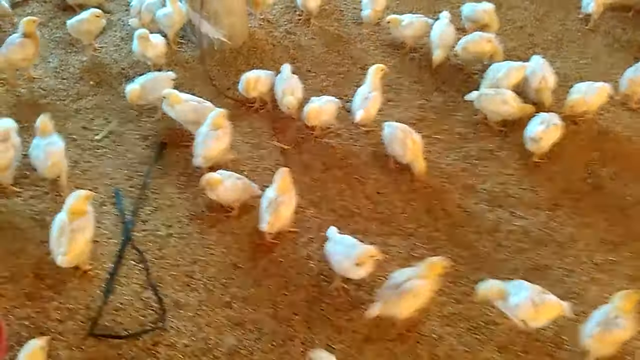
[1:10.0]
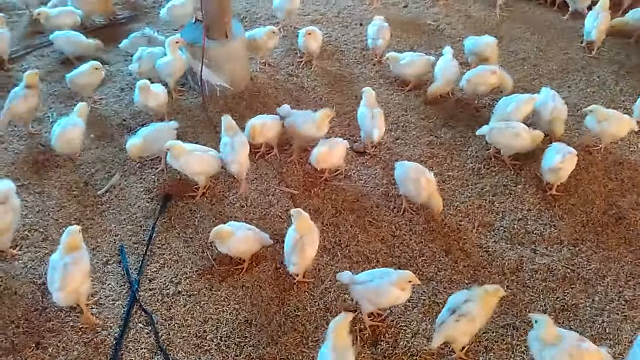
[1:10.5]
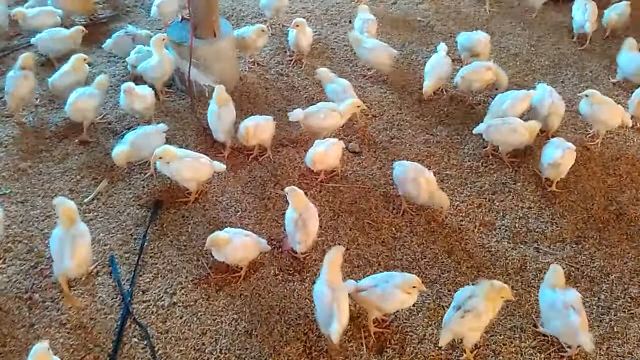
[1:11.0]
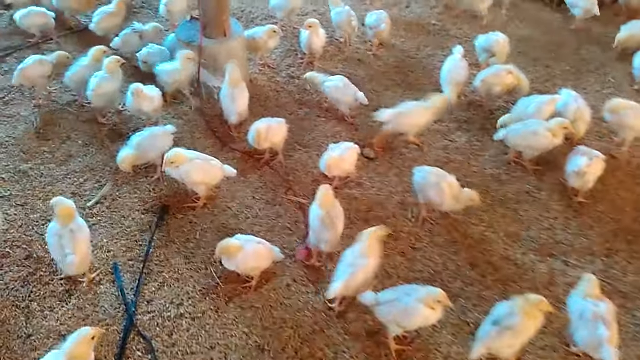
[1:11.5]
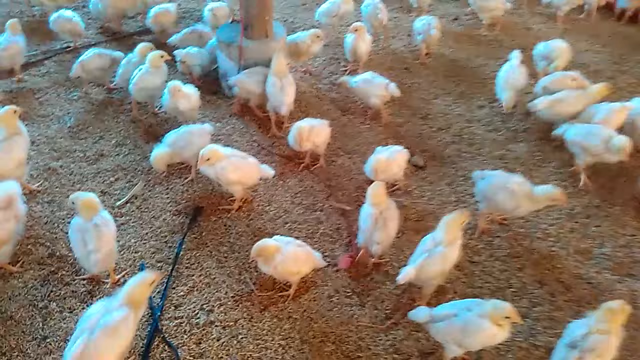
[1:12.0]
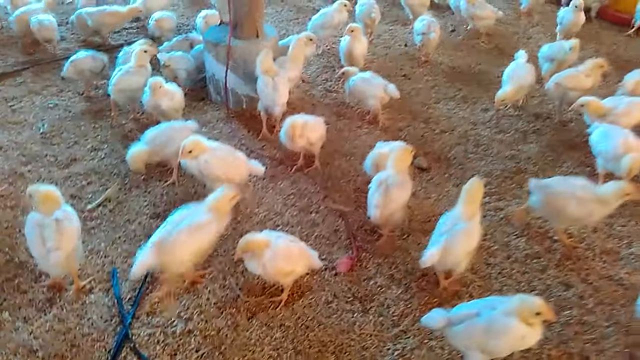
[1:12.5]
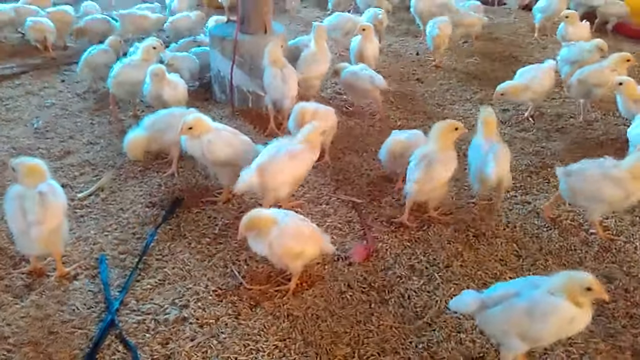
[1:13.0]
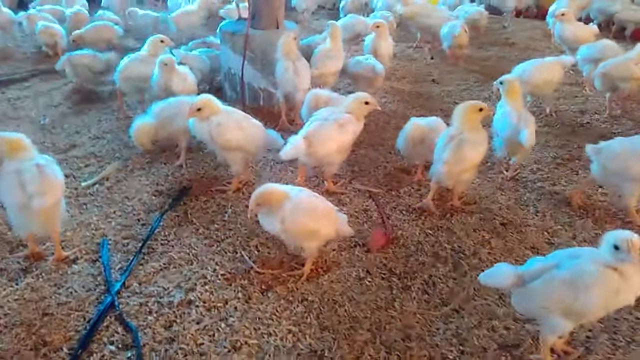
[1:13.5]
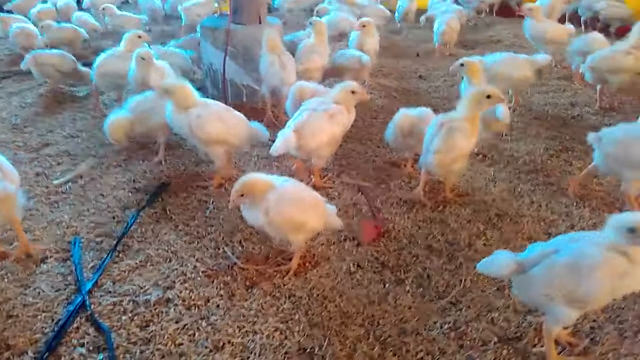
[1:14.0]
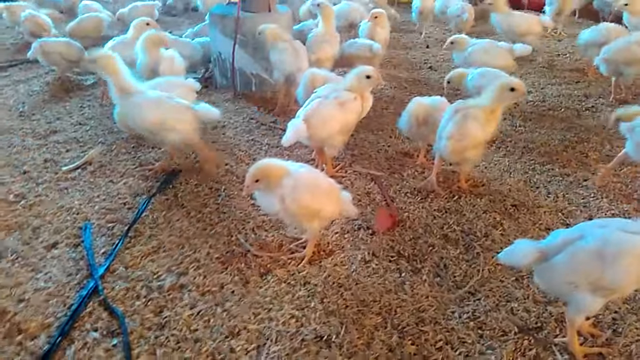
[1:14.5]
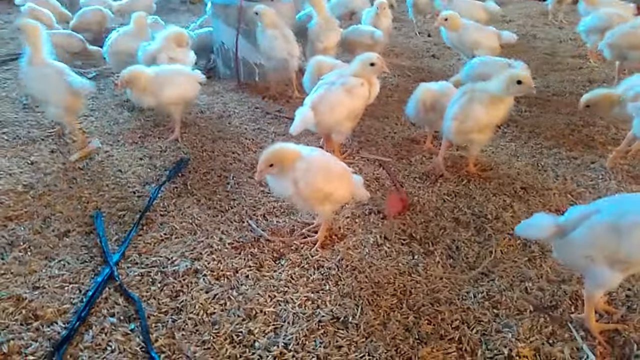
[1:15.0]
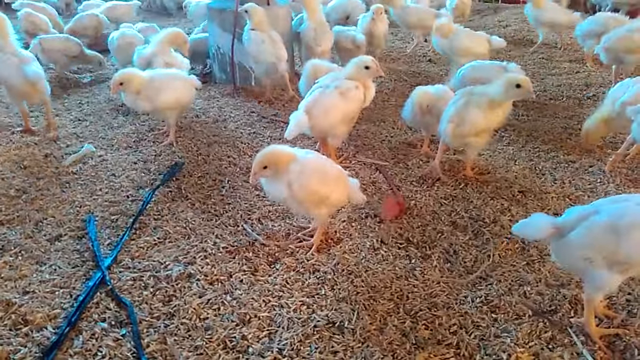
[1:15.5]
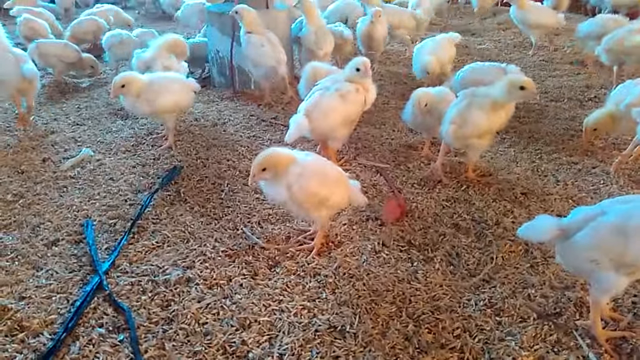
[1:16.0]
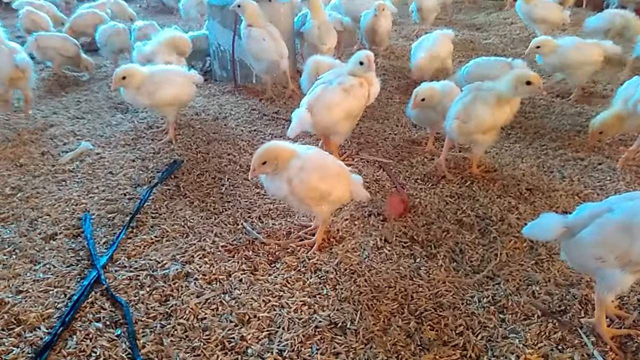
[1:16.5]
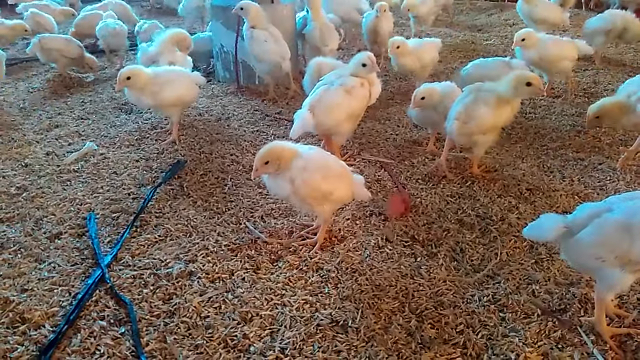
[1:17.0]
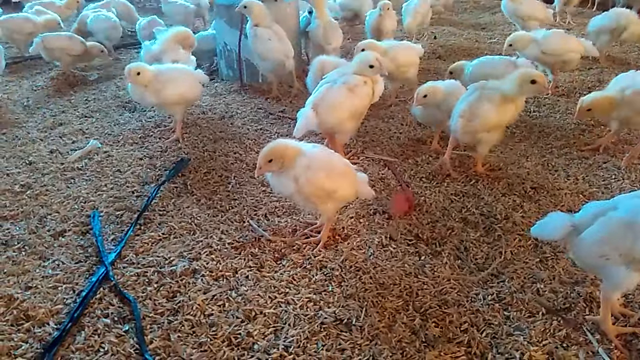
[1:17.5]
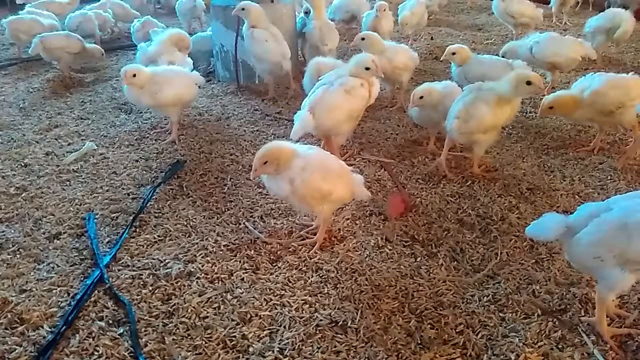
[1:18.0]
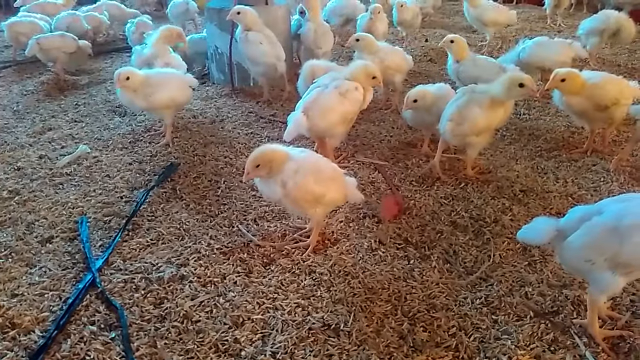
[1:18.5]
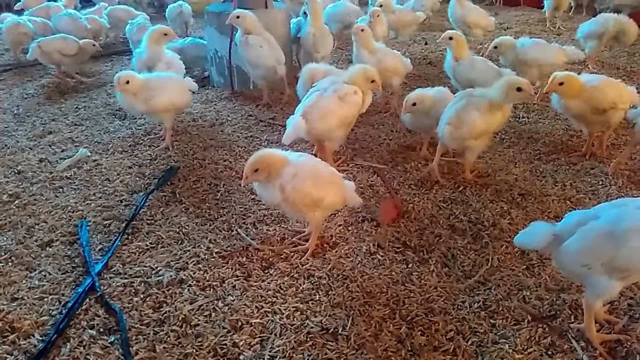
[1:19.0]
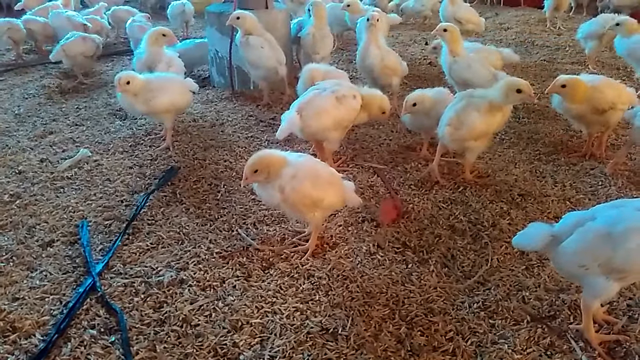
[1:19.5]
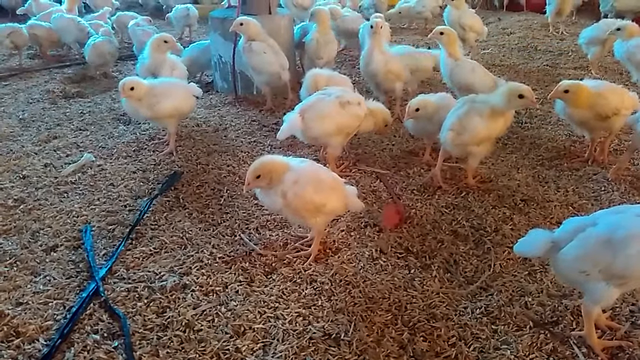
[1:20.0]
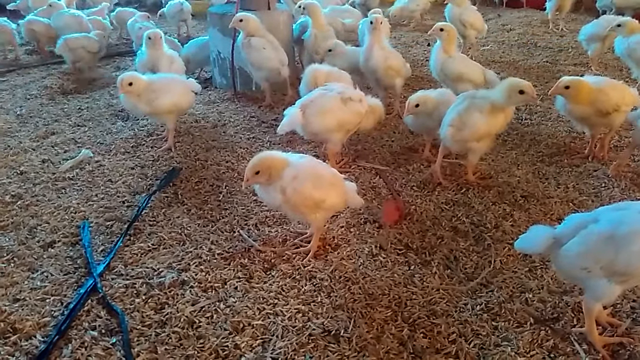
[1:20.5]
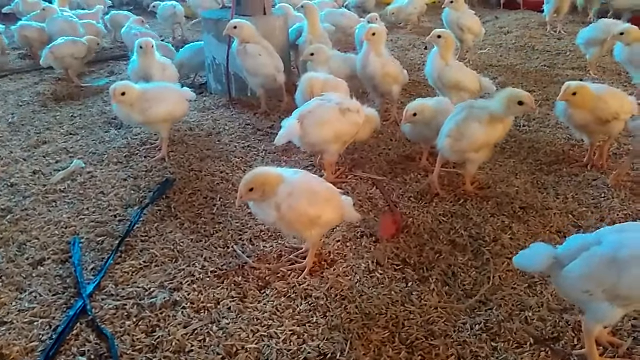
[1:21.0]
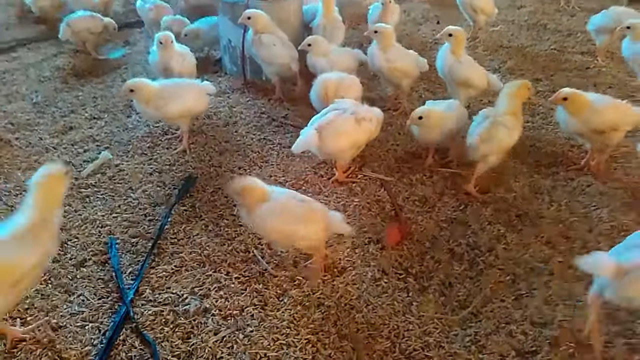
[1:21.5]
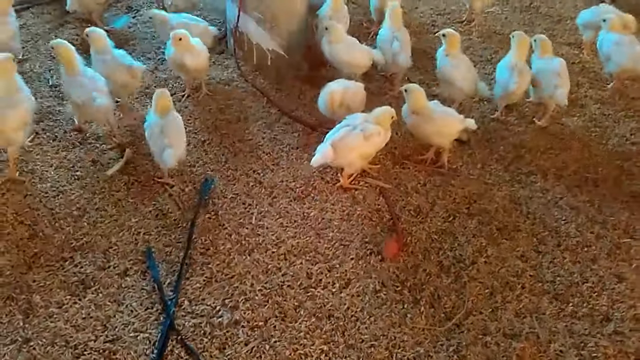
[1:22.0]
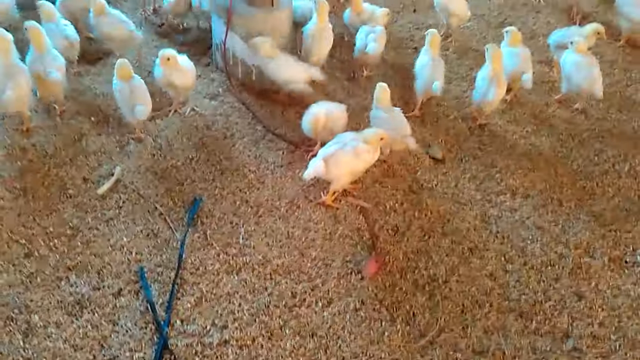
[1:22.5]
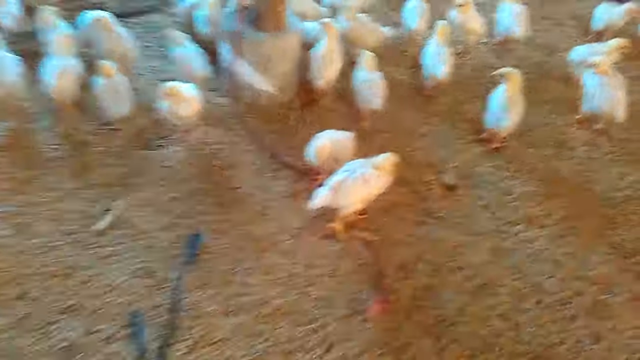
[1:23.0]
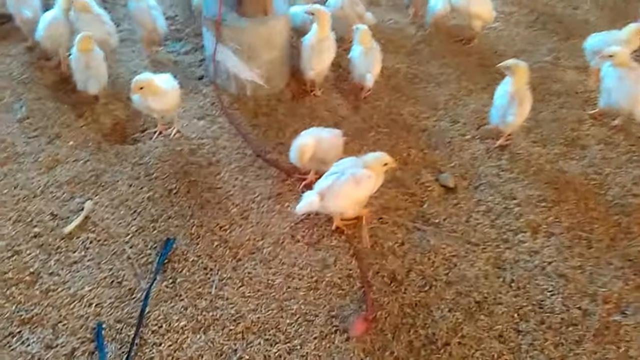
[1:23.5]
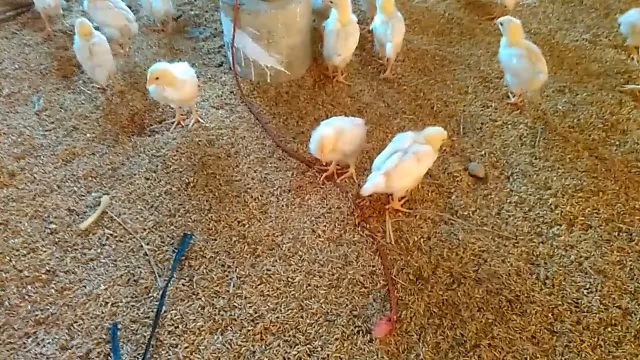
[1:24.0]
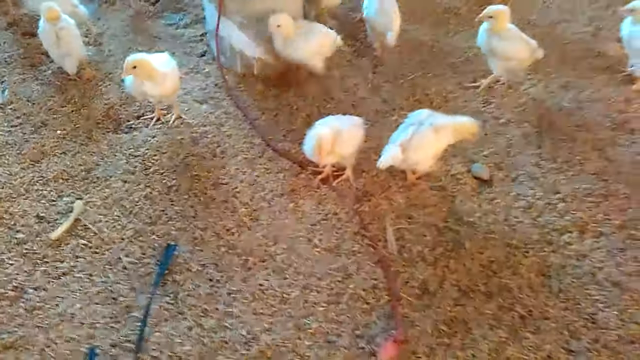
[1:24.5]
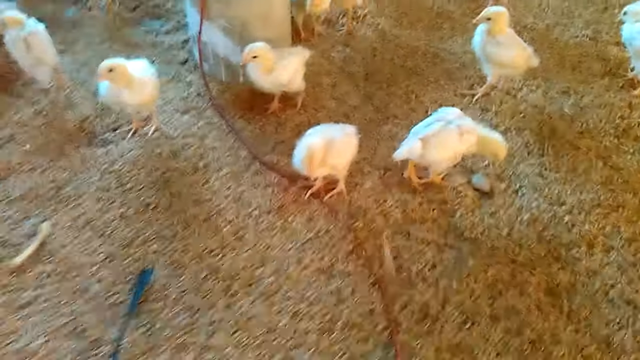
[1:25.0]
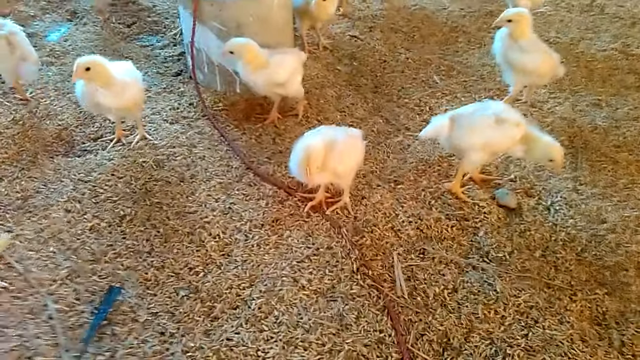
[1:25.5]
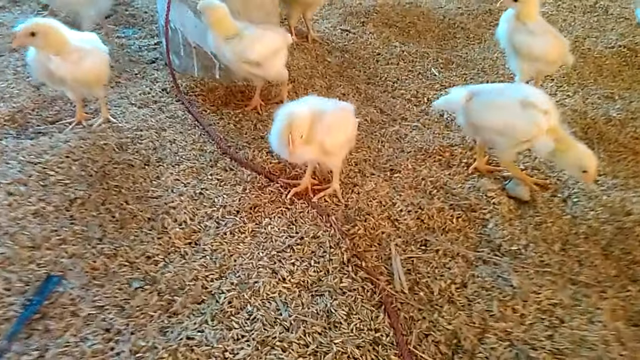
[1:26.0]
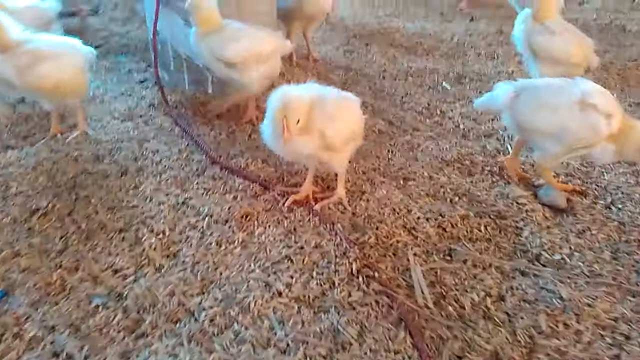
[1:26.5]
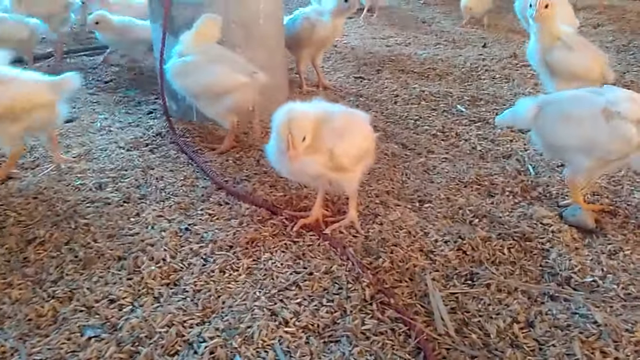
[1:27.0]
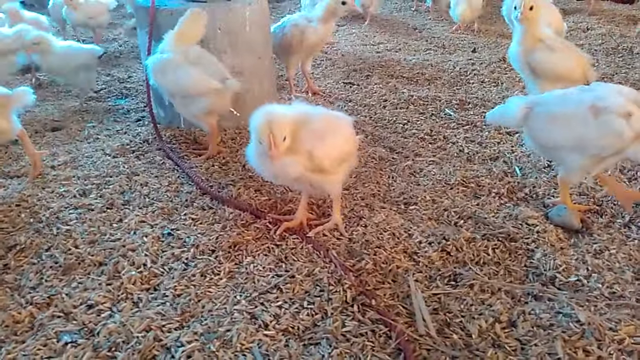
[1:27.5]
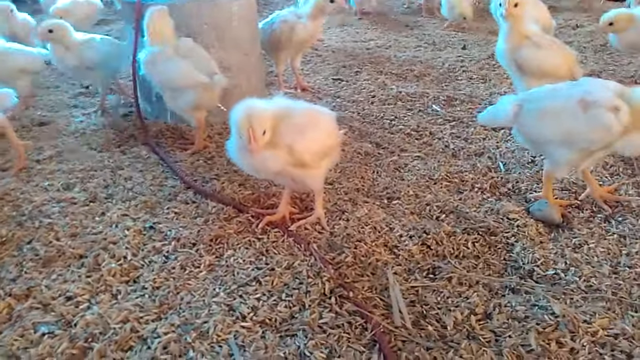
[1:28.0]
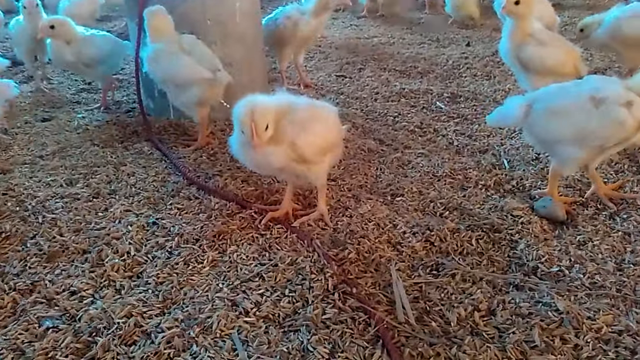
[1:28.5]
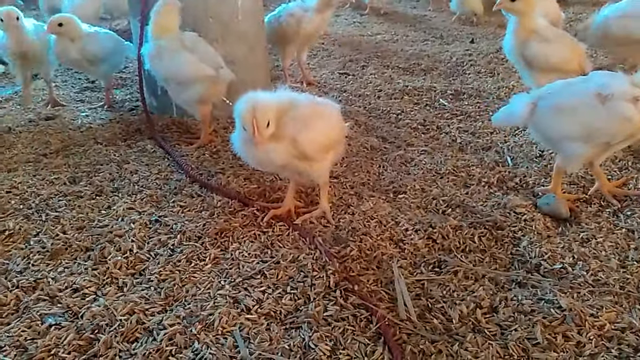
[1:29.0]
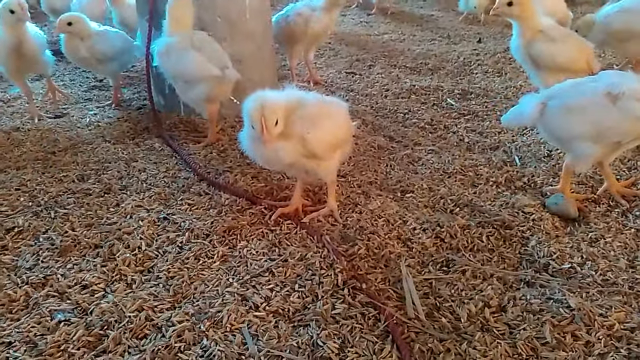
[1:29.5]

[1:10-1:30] An overhead shot shows 20 to 30 baby chicks in a barn-like environment, walking around on small brown pellets. The camera zooms in and comes down to the chicks' level to focus on one chick in the center of the screen that is not moving as much as the others. The camera operator then lifts the camera back up to an overhead shot, and the motion makes the chick that was standing still run off and join the crowd. The camera then focuses on another chick that is standing still and remains motionless as the camera comes back down level with the chicks on the ground. It seems that whenever the camera gets close, the chicks freeze up.